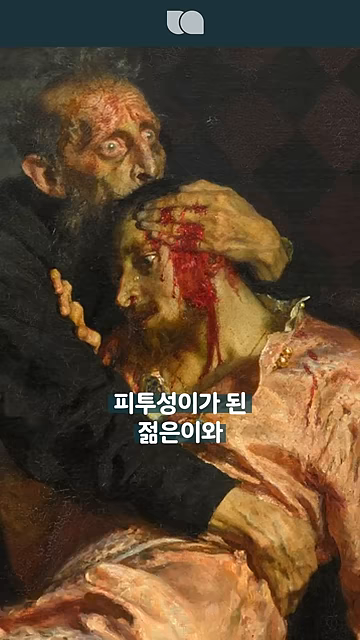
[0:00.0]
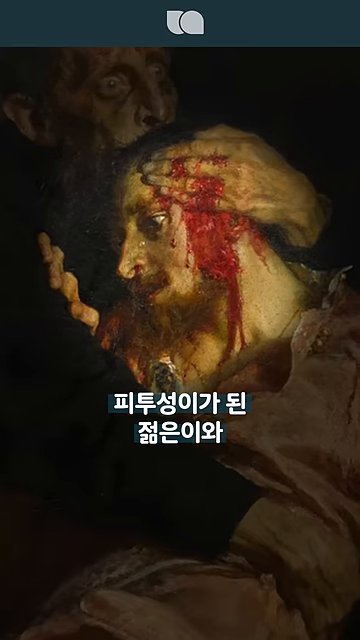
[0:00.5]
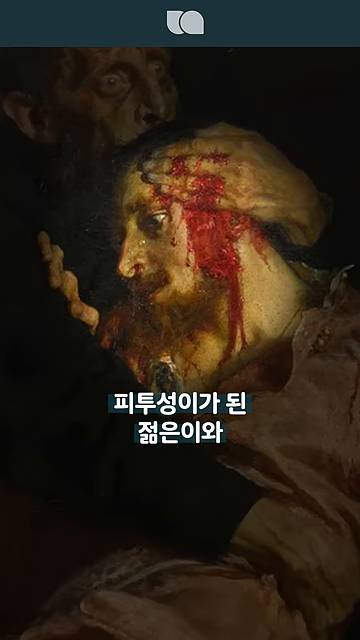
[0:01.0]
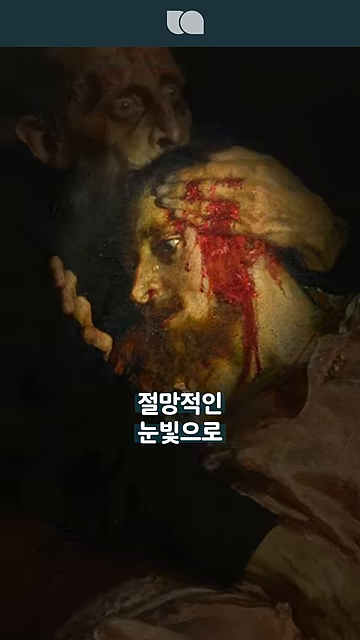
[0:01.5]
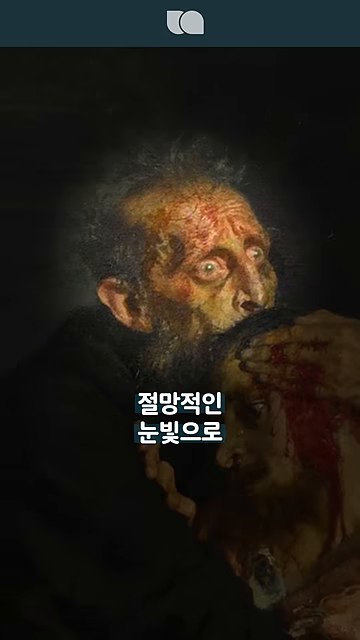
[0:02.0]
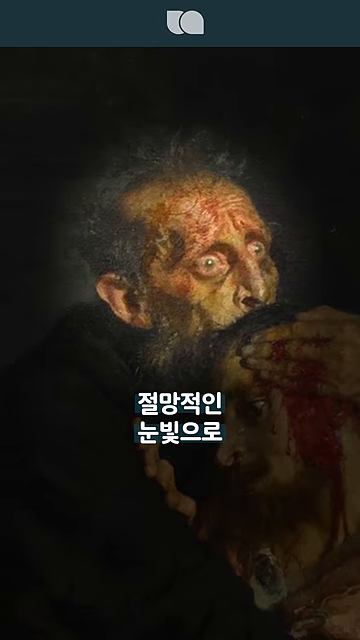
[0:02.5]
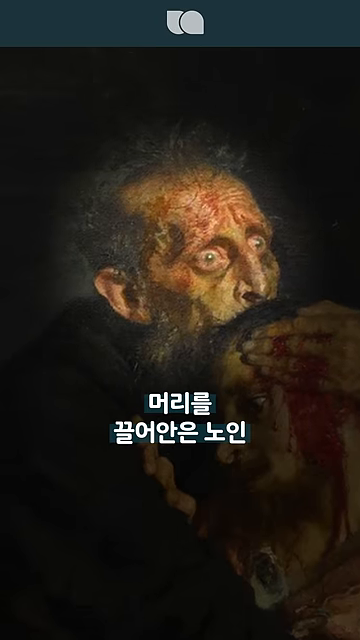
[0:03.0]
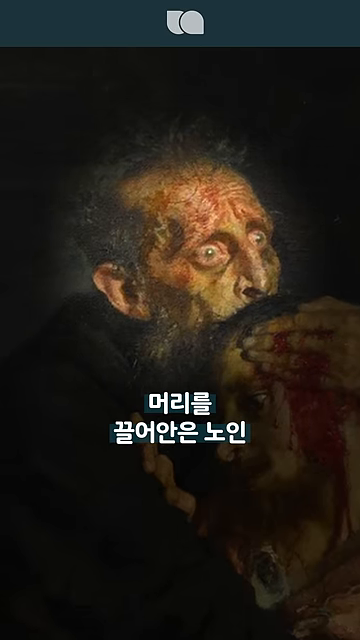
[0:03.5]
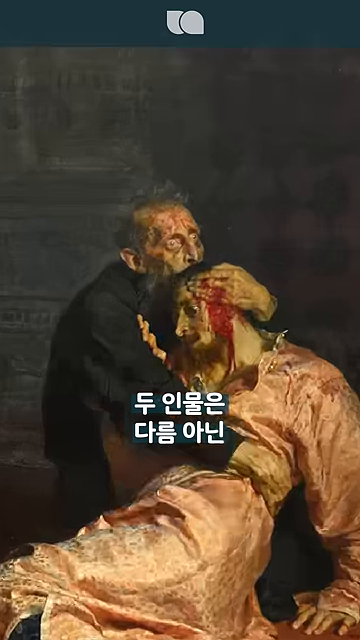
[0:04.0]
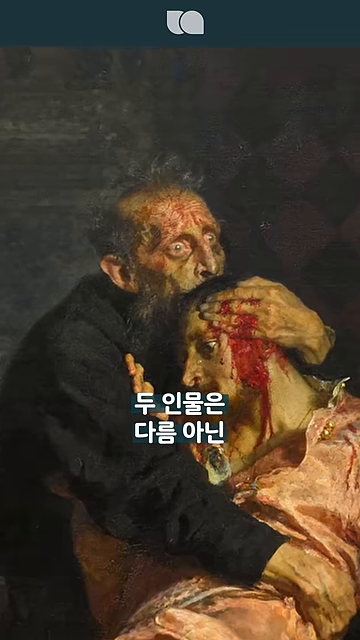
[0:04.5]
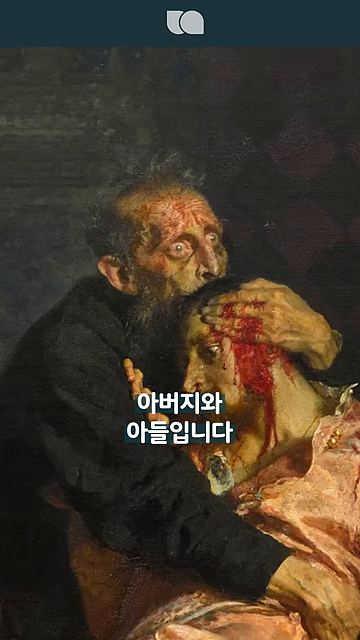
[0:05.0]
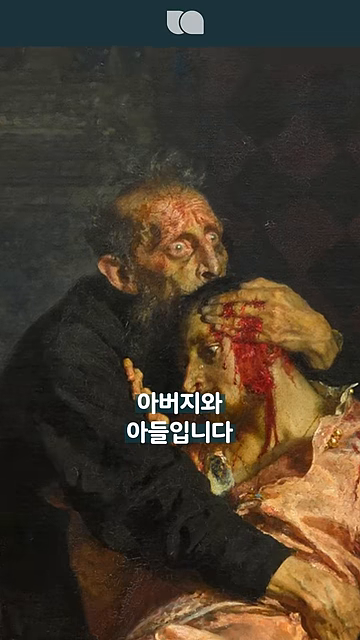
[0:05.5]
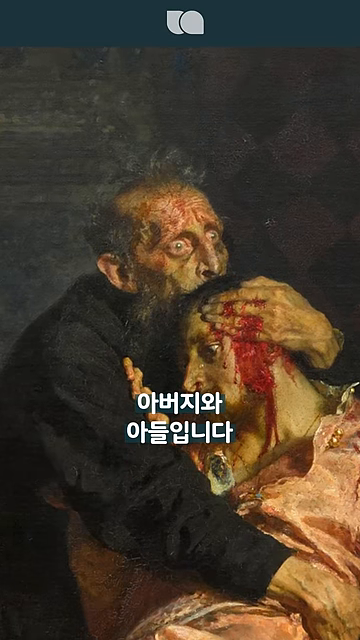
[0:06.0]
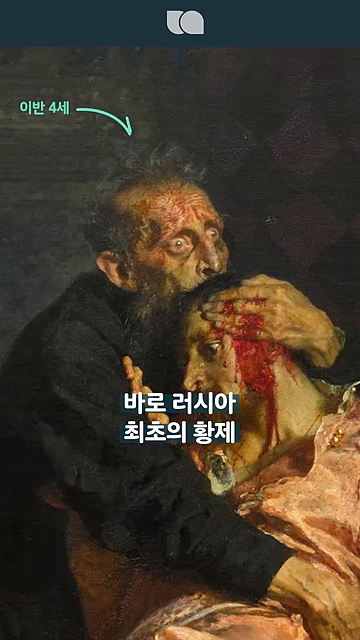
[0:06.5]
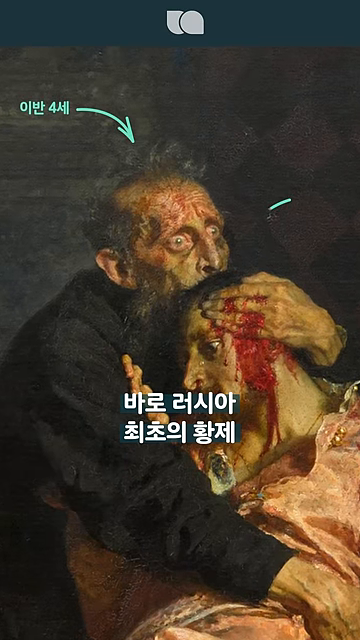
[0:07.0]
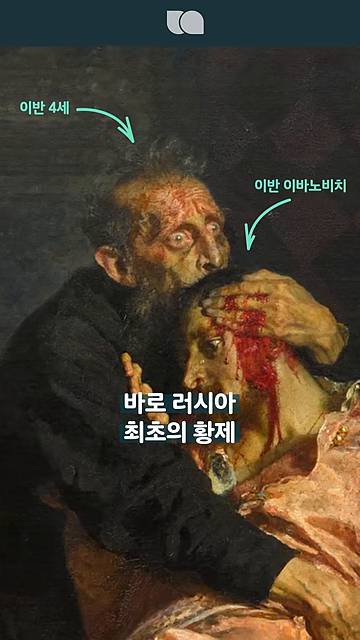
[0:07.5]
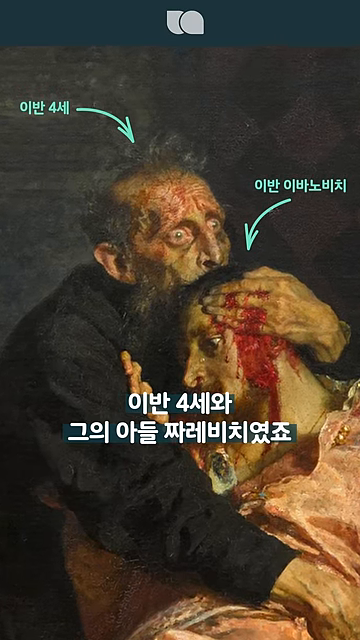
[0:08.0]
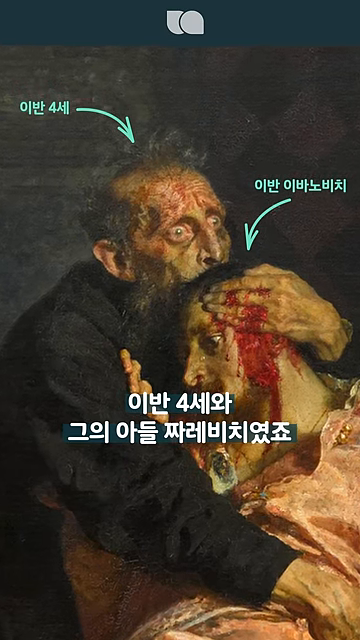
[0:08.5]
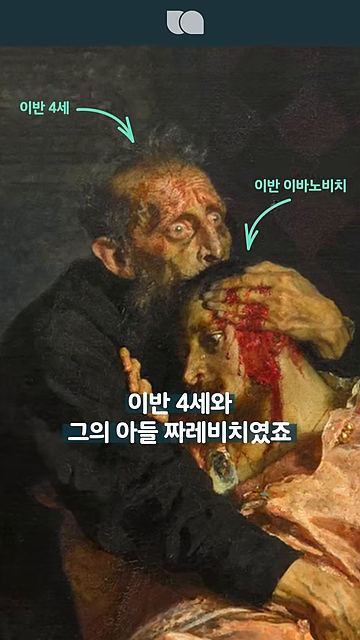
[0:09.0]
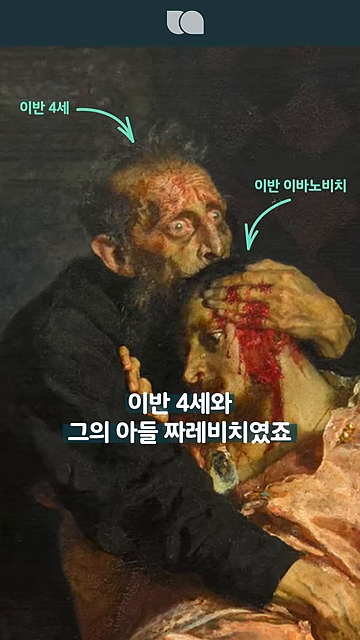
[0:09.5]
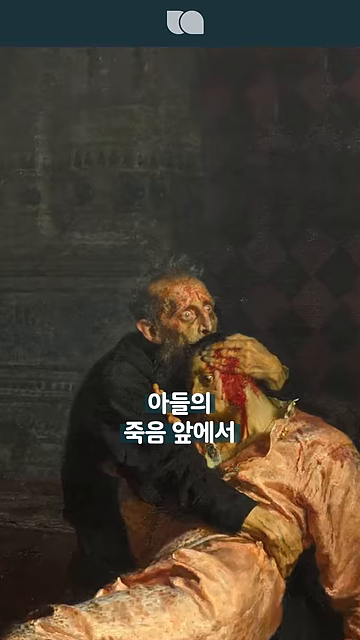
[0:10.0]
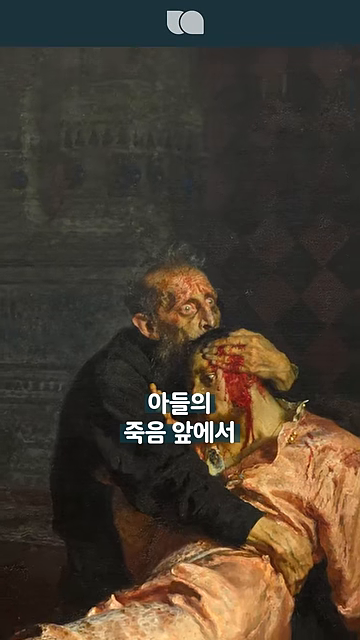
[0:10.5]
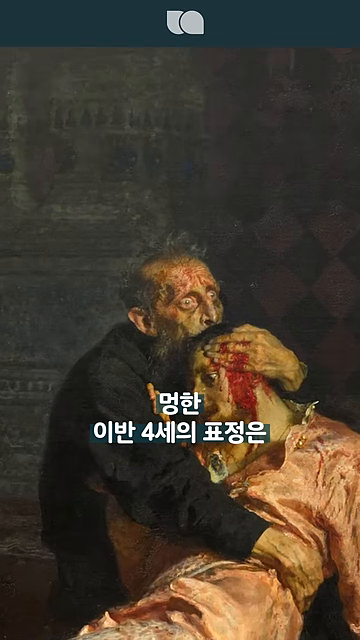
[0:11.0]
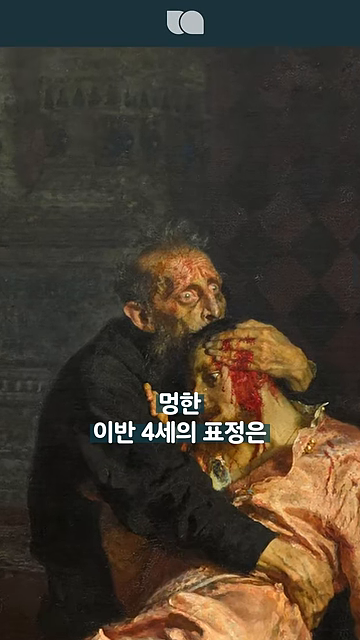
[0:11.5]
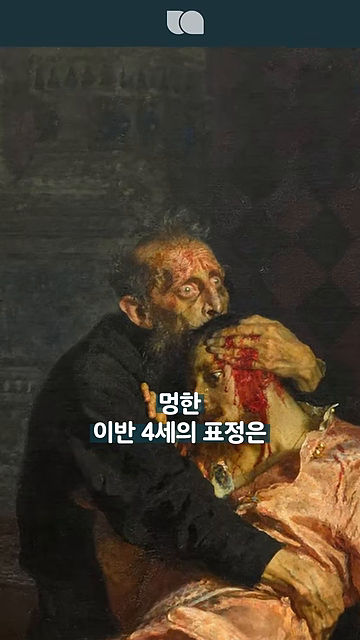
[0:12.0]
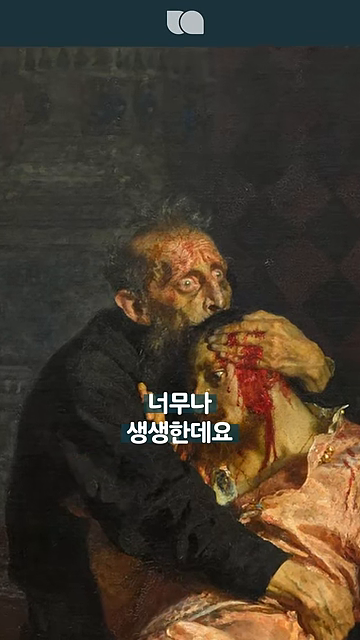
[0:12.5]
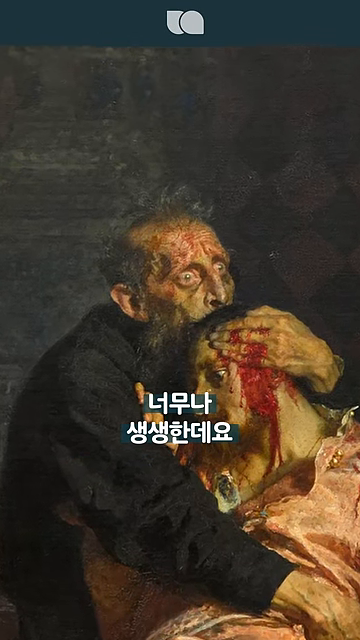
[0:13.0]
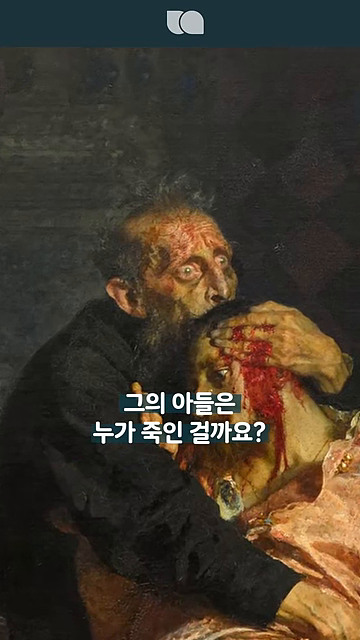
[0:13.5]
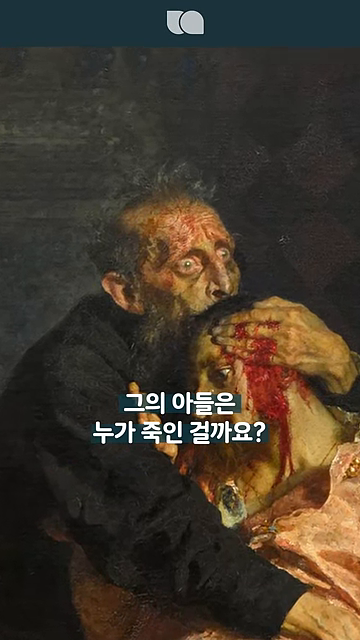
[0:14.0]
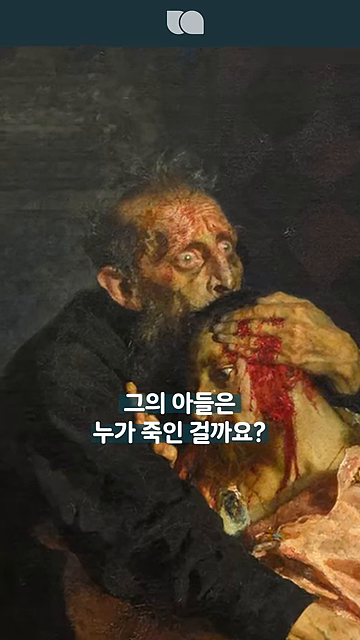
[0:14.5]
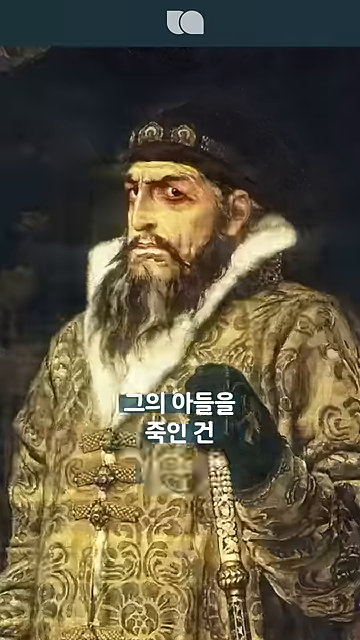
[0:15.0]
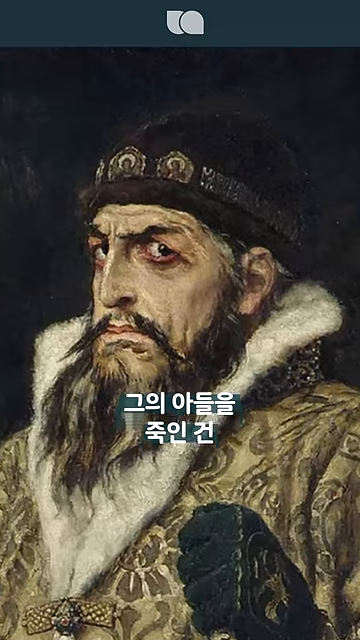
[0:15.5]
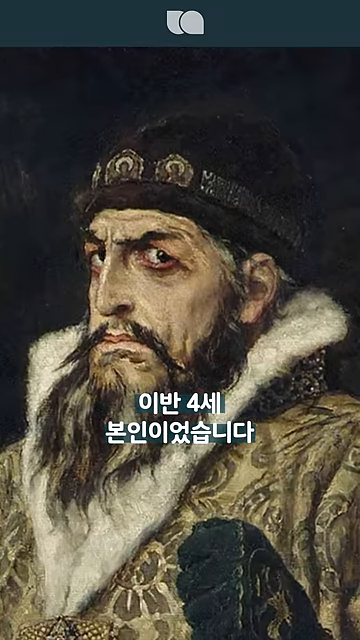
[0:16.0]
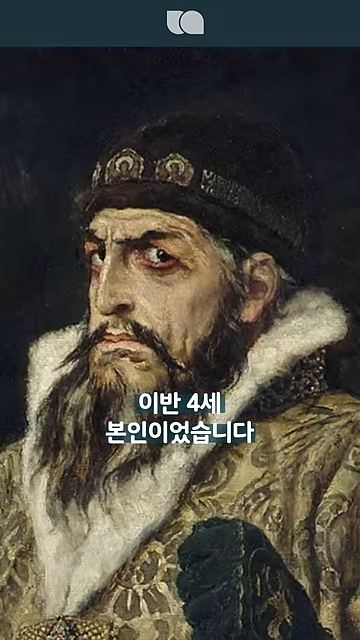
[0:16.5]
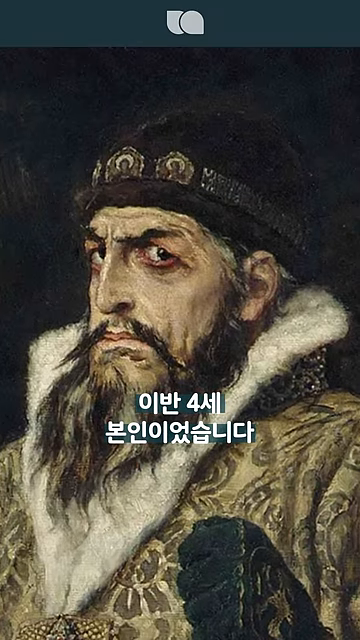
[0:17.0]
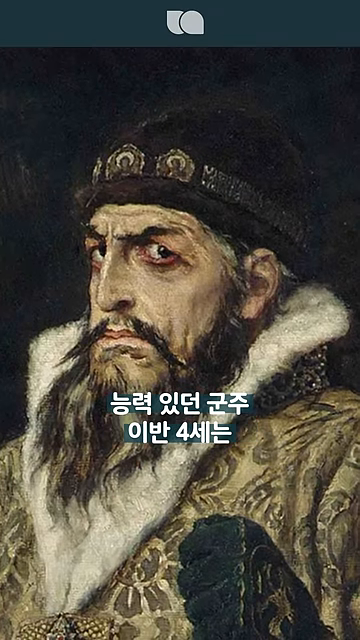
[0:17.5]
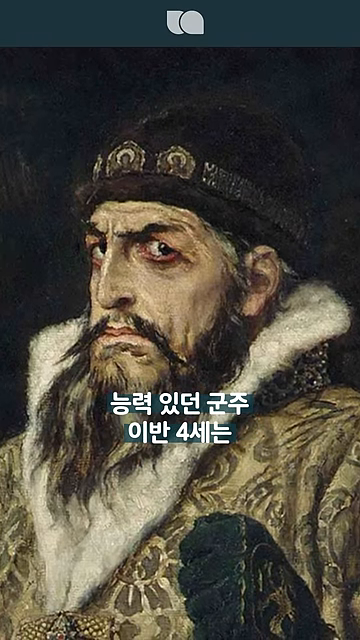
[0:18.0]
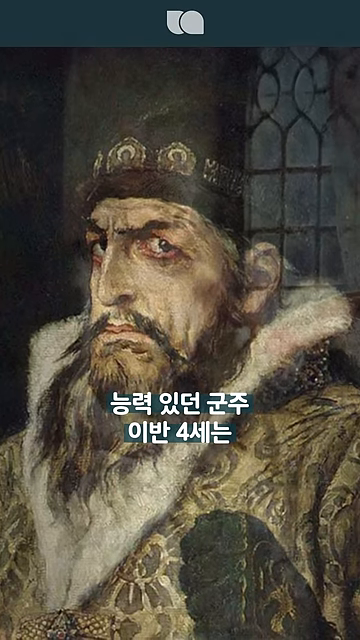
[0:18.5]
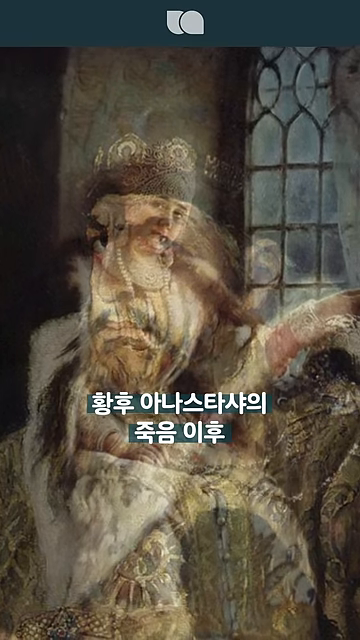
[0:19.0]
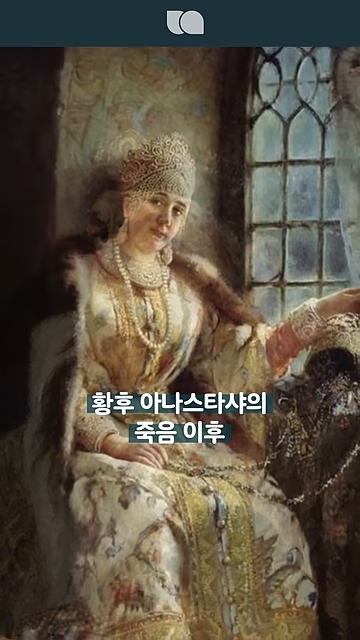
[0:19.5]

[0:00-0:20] A painting shows a man who has been shot in the side of the head being held by another man with a horrified look on his face. The man who was shot wears bedclothes. The video cuts to a man in ornamental clothing, likely a royal. It then shifts to a woman, likely his wife, who also wears ornamental clothing and sits on a golden-colored throne. The painting seems to depict a dreary tragedy.